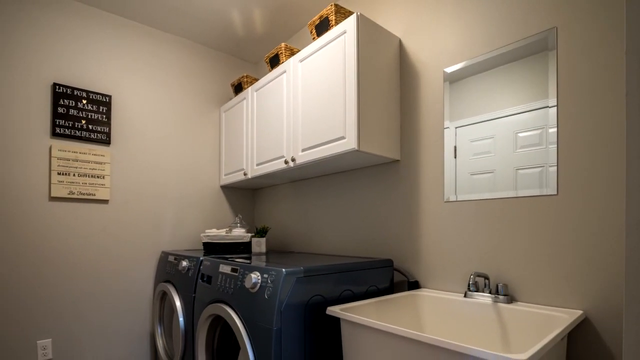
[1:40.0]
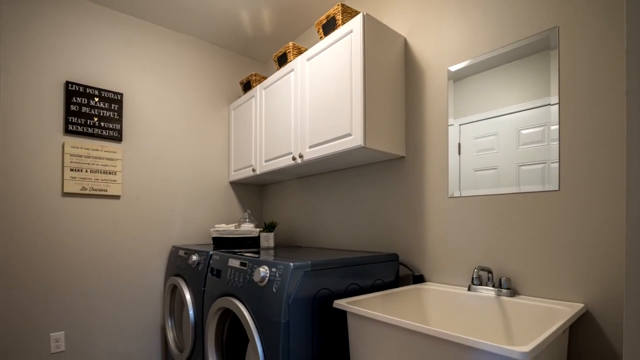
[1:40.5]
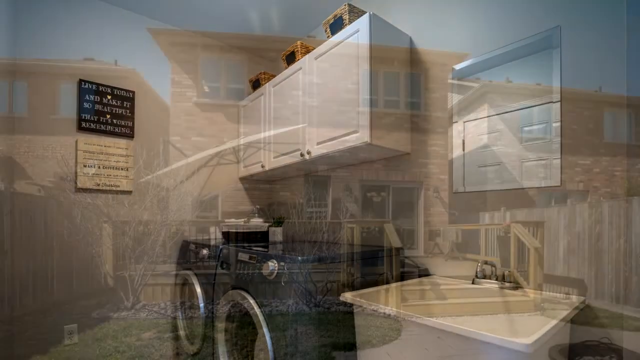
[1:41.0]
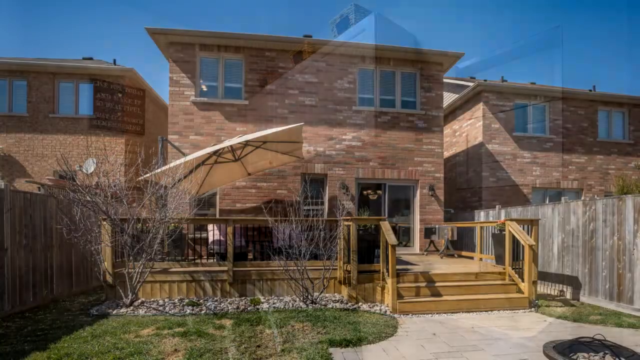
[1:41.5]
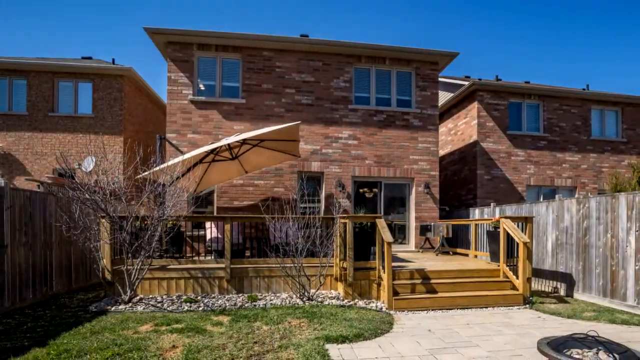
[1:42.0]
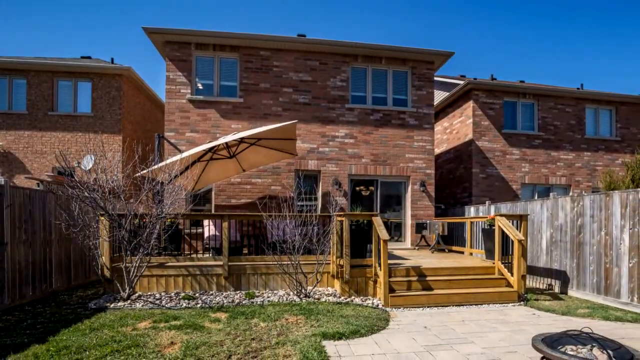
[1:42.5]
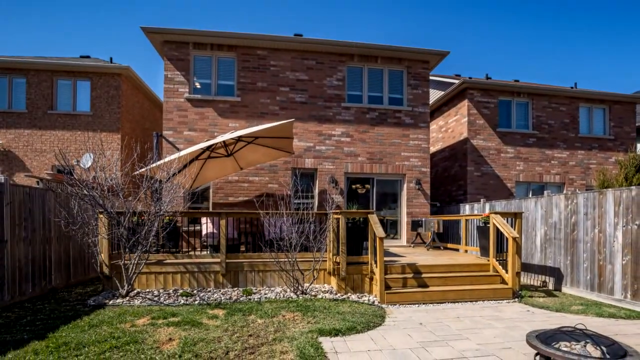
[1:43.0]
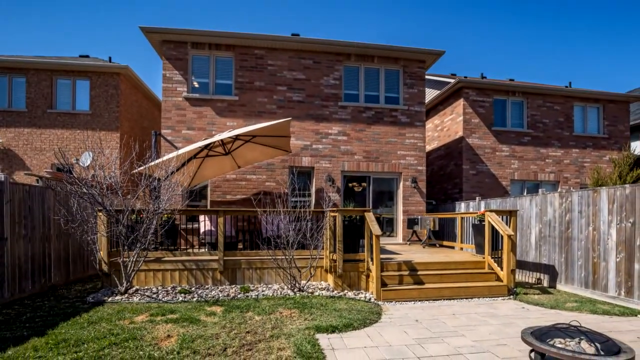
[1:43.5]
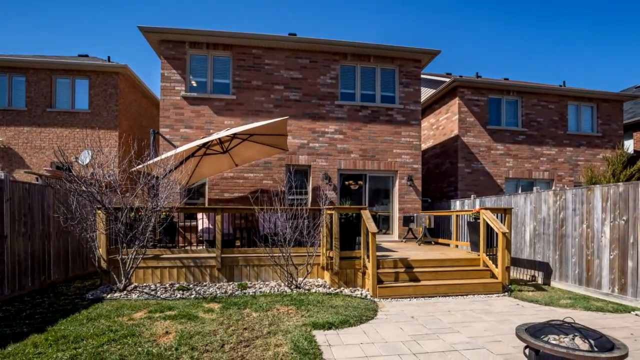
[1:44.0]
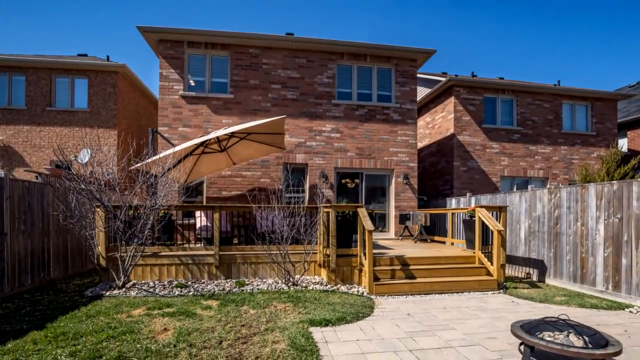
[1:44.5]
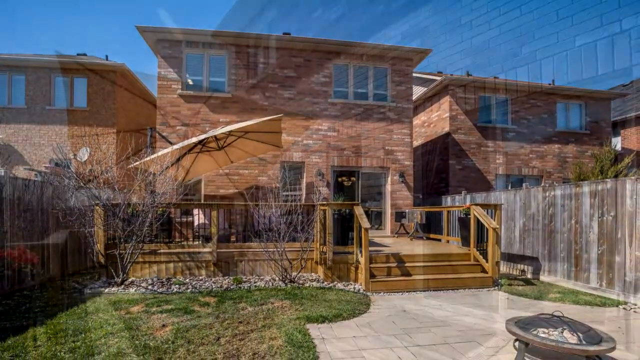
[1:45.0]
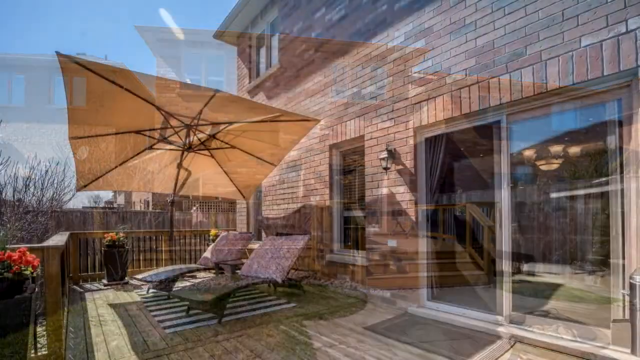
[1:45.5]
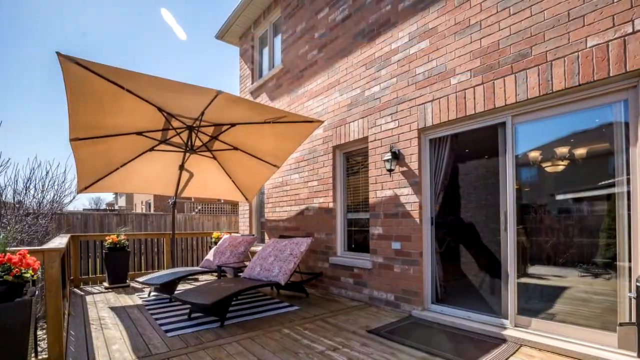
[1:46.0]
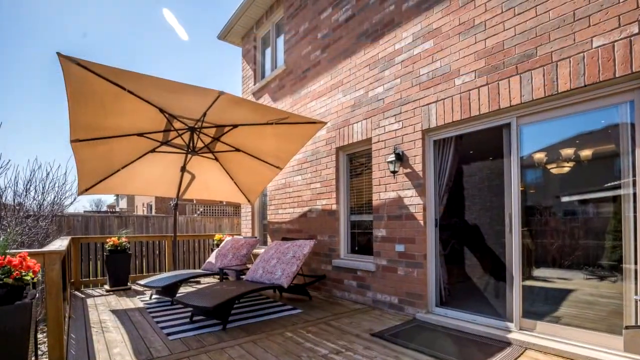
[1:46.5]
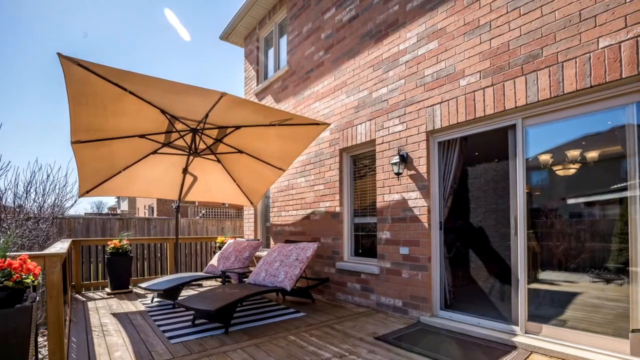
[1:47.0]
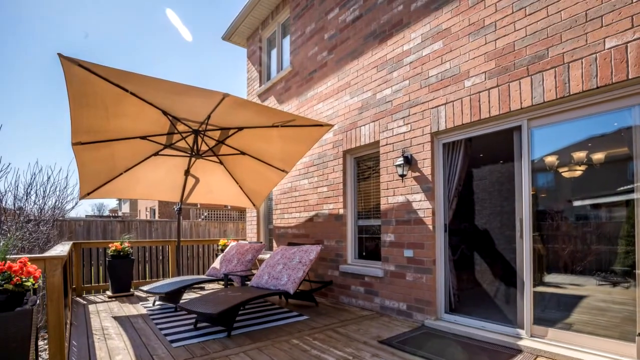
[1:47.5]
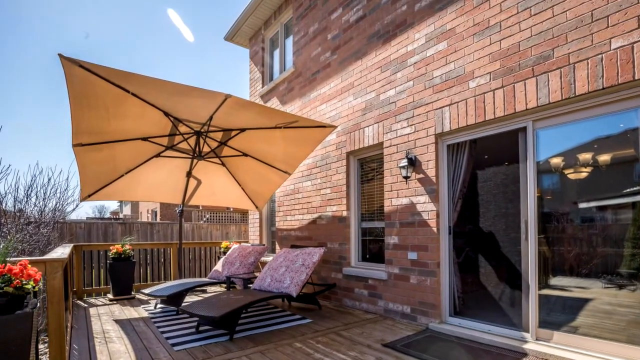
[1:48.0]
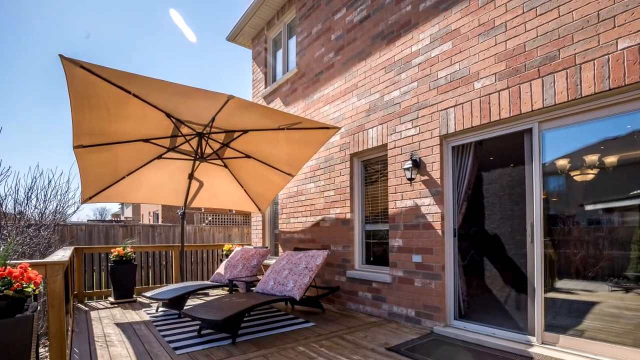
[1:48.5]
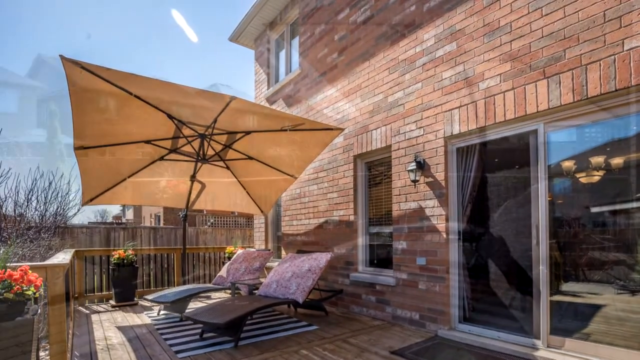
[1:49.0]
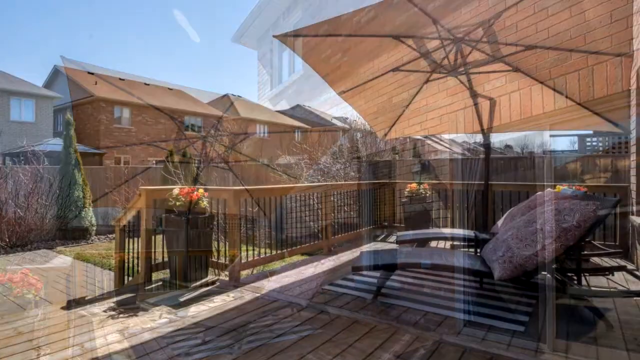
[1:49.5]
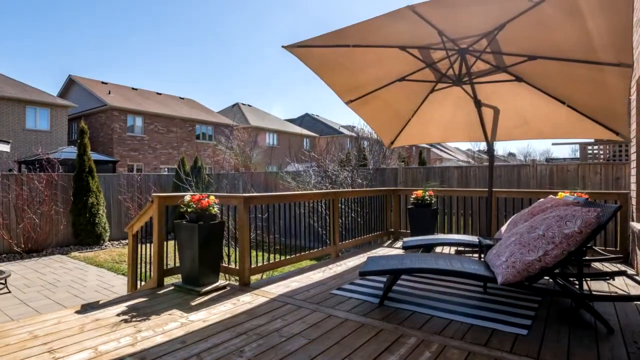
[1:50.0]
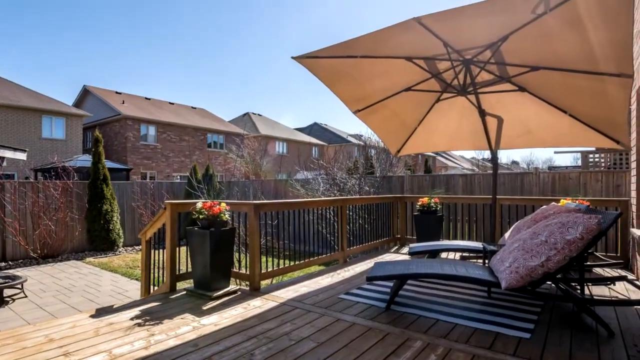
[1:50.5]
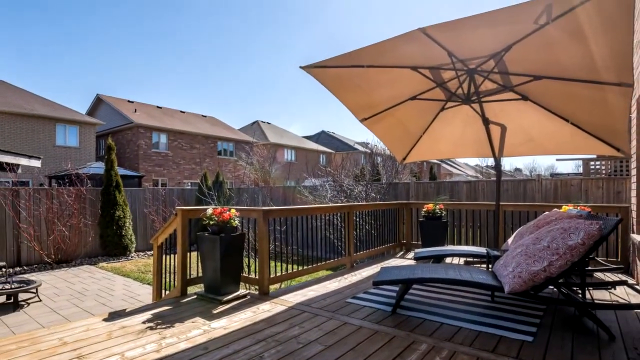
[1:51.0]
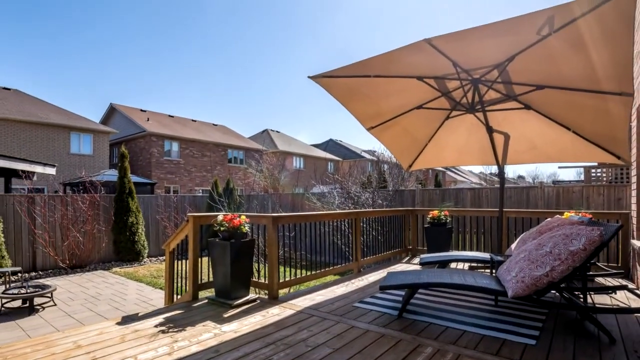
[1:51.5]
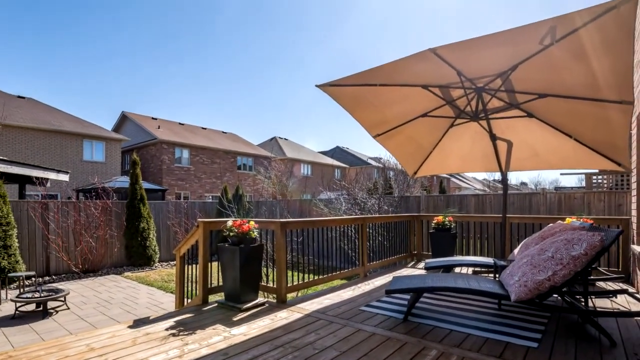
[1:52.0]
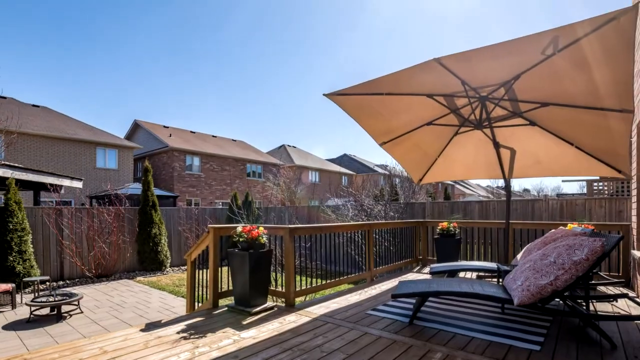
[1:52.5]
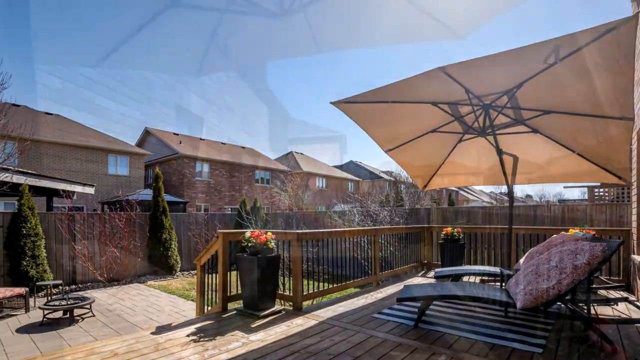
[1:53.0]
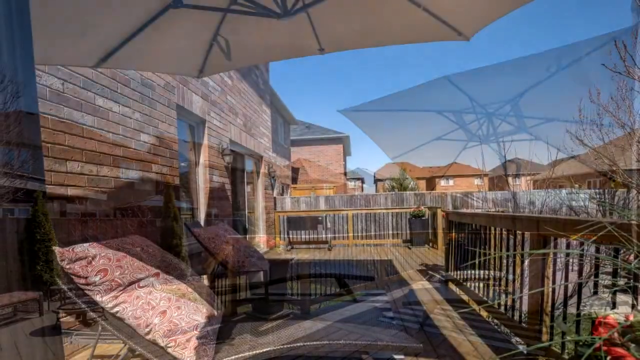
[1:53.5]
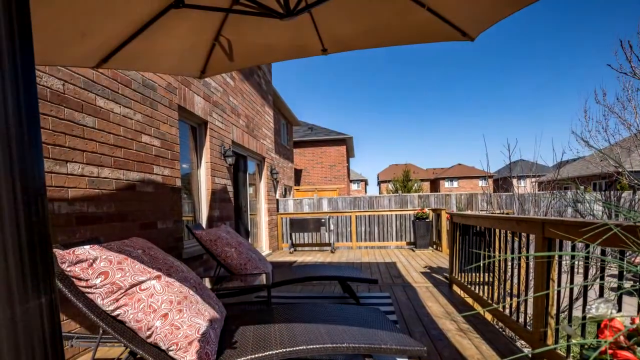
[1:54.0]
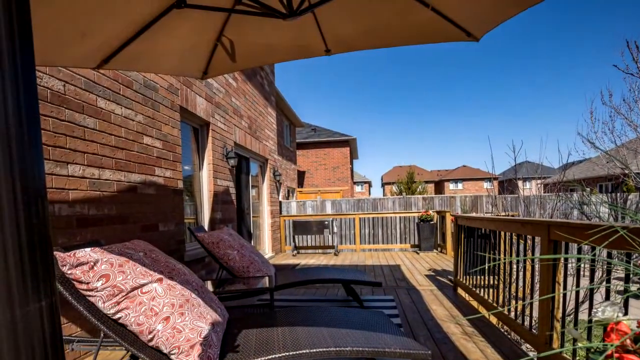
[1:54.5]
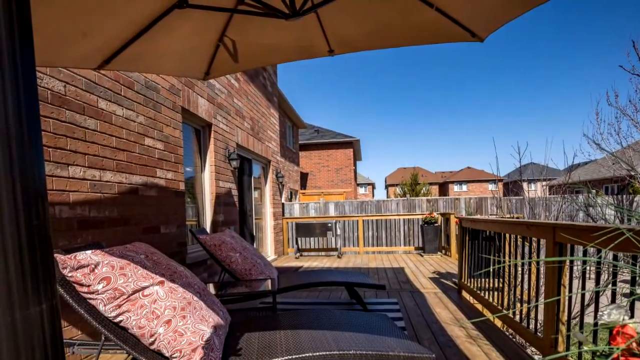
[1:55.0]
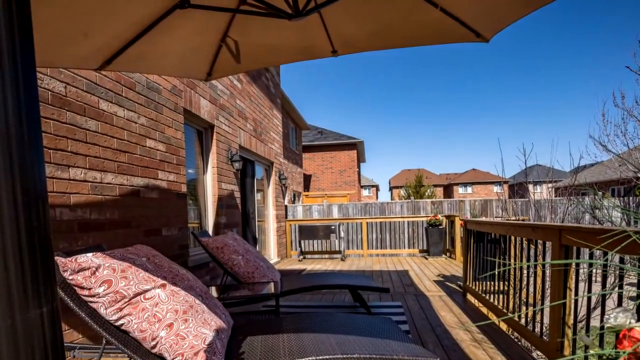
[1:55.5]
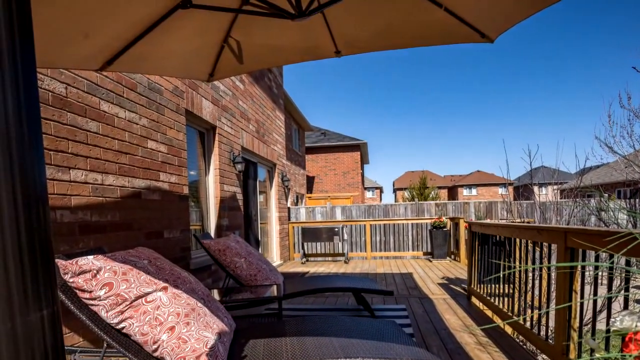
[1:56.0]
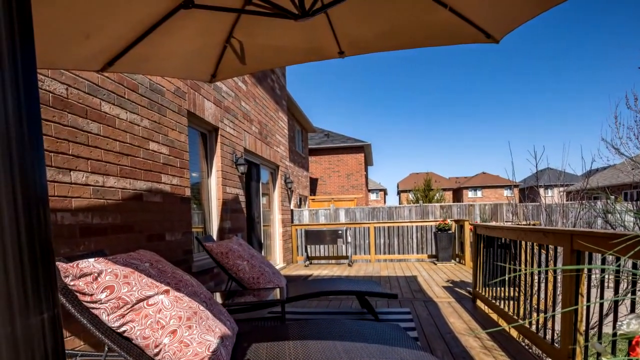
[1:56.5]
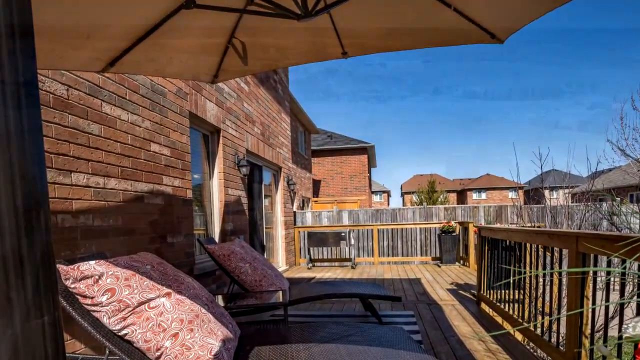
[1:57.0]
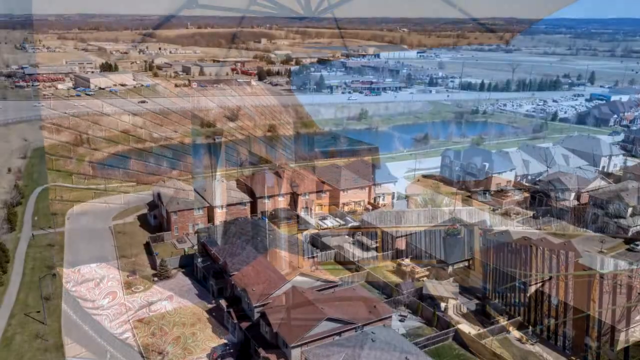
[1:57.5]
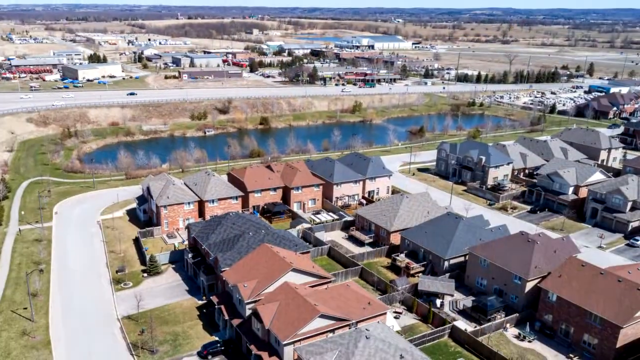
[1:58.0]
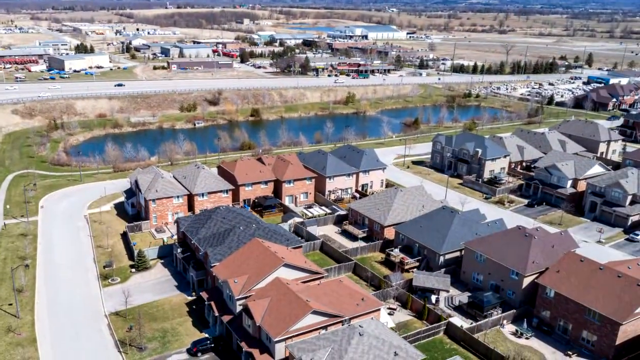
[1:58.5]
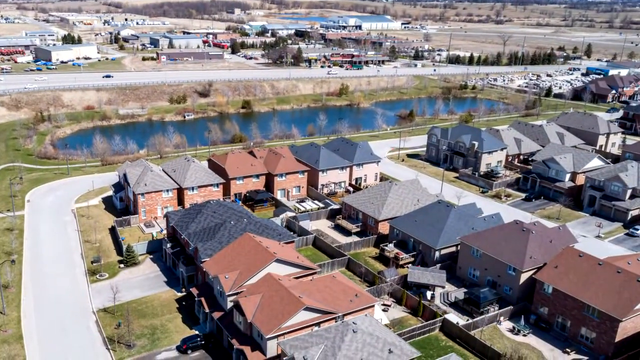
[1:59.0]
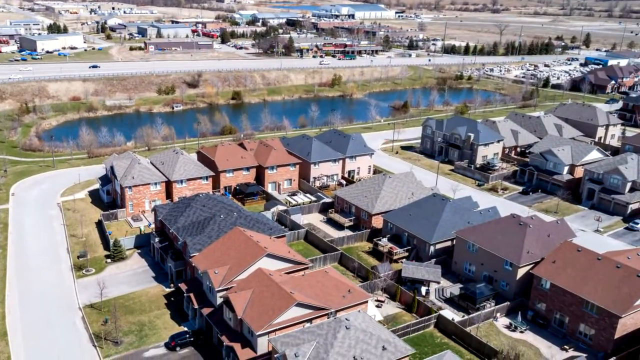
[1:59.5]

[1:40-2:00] A laundry room inside the house has a washer and dryer with a set of three cabinets above them, a small sink to the right, and a closed window above the sink. A scene transition shows the backyard. The back of the house is built of bricks, with a new wooden porch attached to it. There is a small amount of grass and a paved walkway. Another angle of the porch shows a sun cover above two lawn chairs. A third angle, looking out from the house, shows additional houses outside the wooden fence, all looking relatively similar, built of bricks and having fences. Toward the end, an overhead view of the neighborhood shows the houses packed together very tightly next to a large pond.